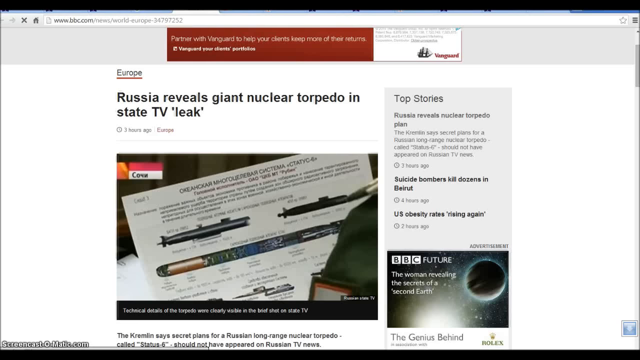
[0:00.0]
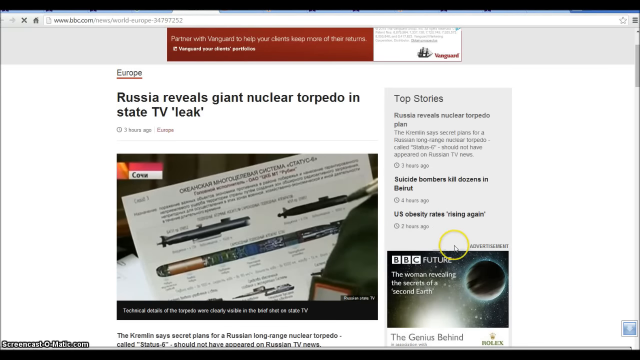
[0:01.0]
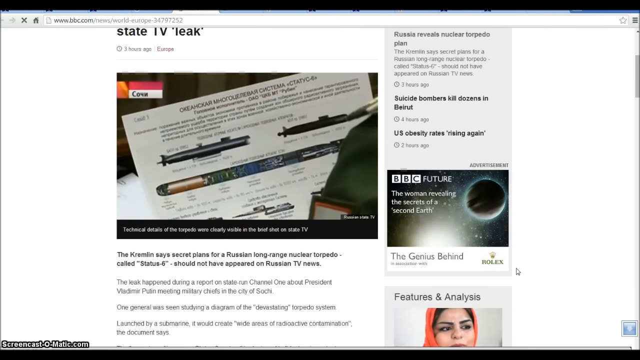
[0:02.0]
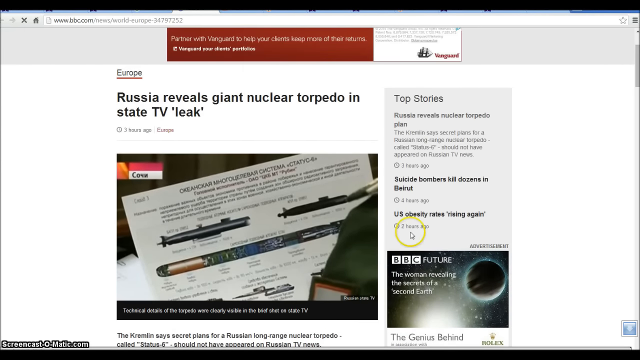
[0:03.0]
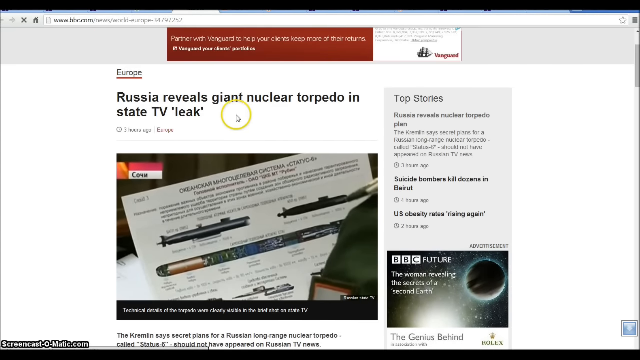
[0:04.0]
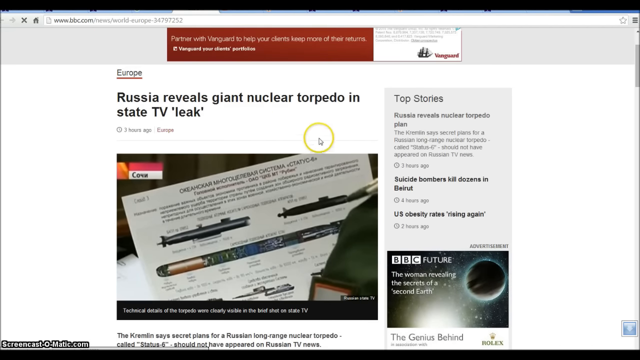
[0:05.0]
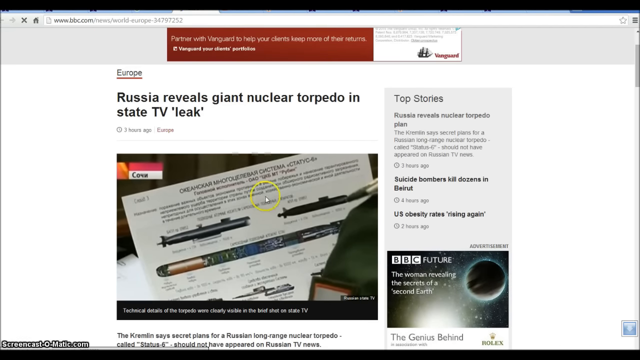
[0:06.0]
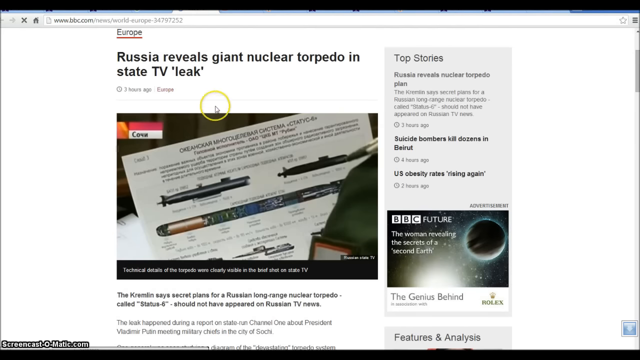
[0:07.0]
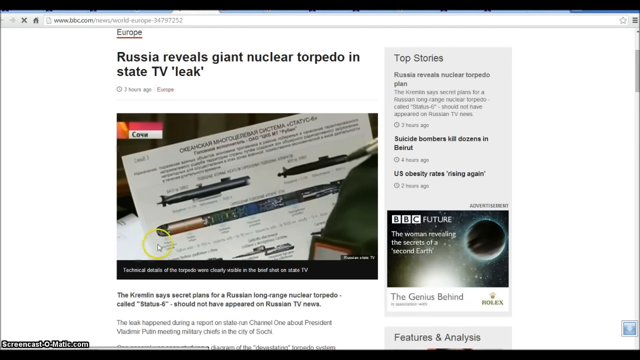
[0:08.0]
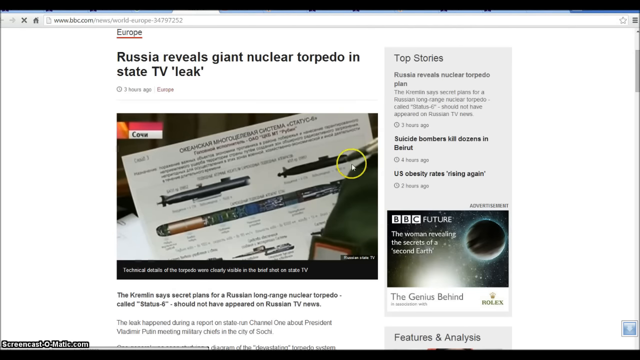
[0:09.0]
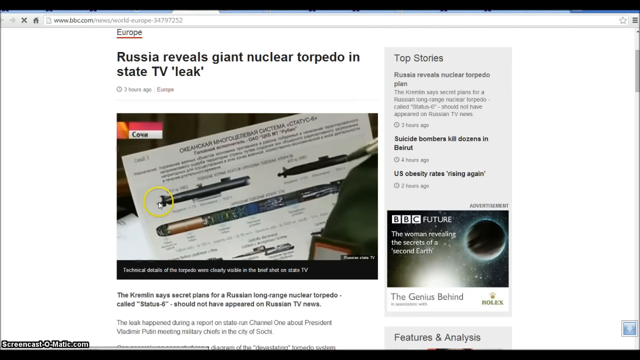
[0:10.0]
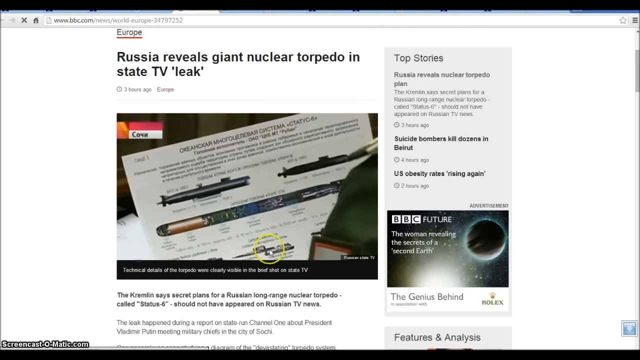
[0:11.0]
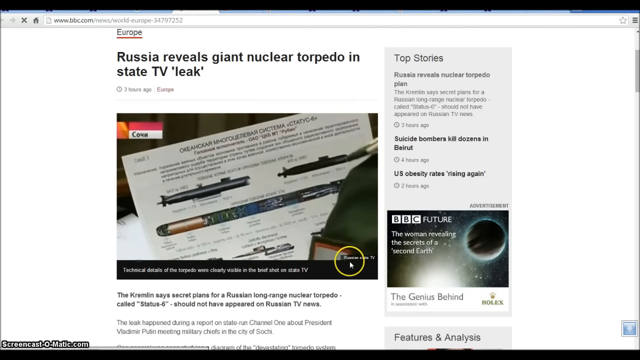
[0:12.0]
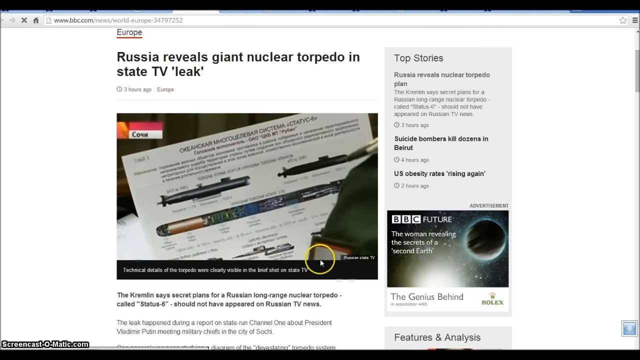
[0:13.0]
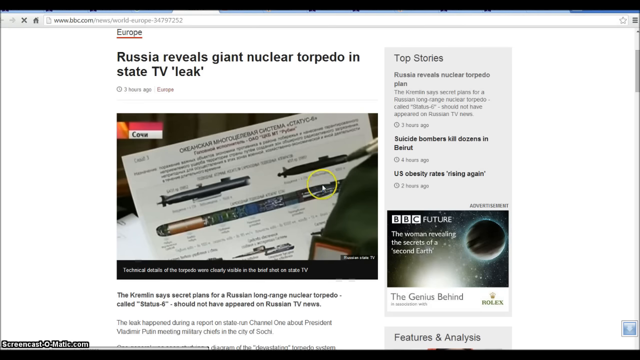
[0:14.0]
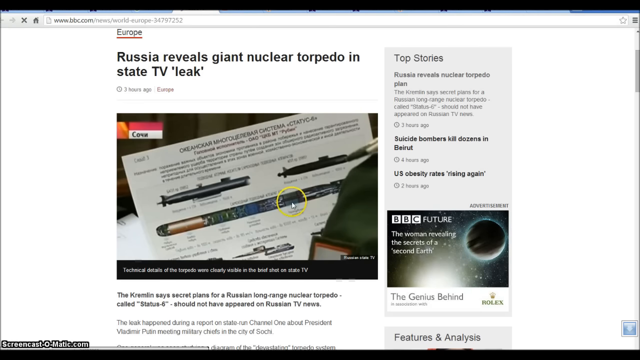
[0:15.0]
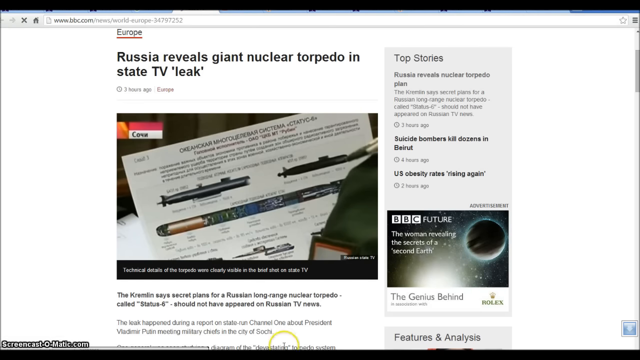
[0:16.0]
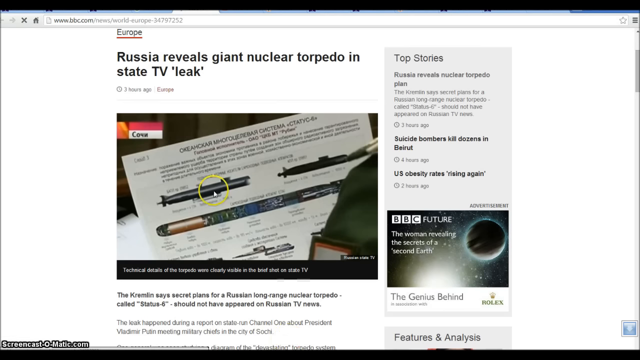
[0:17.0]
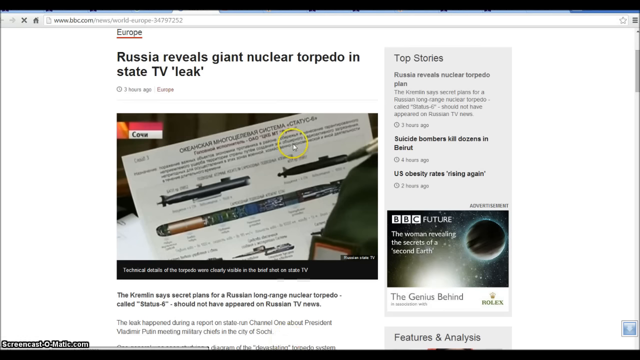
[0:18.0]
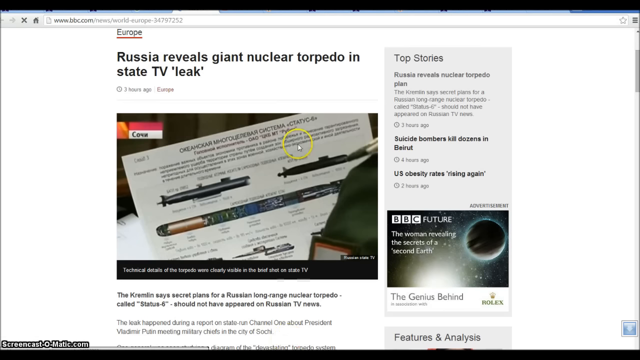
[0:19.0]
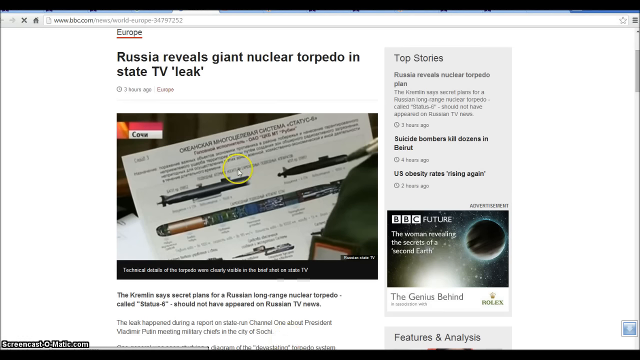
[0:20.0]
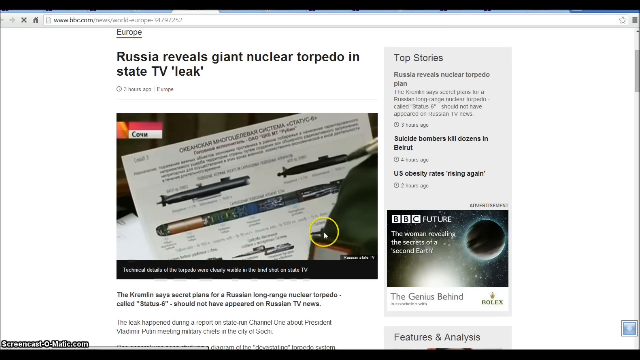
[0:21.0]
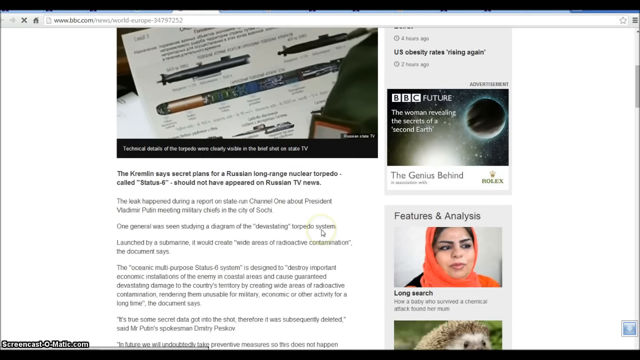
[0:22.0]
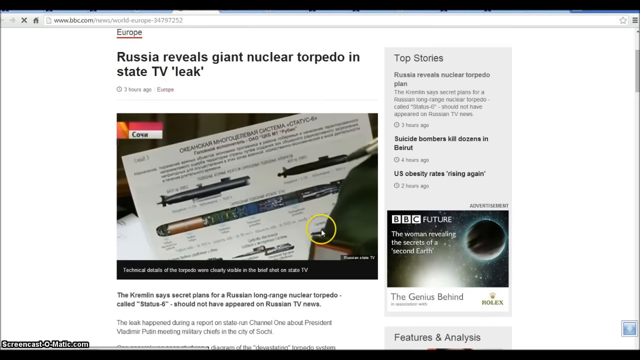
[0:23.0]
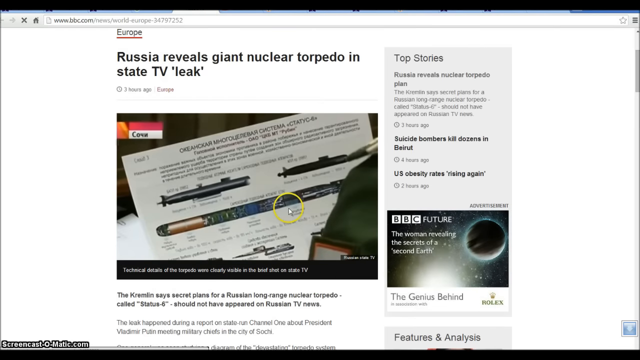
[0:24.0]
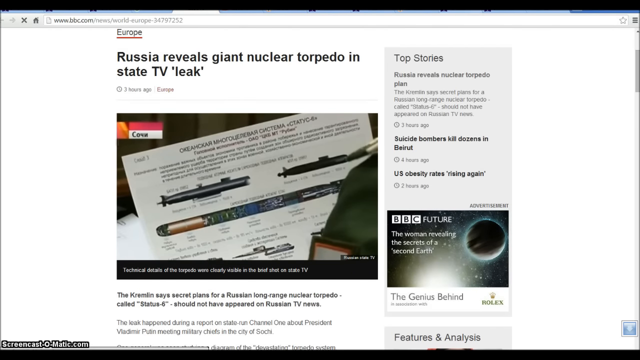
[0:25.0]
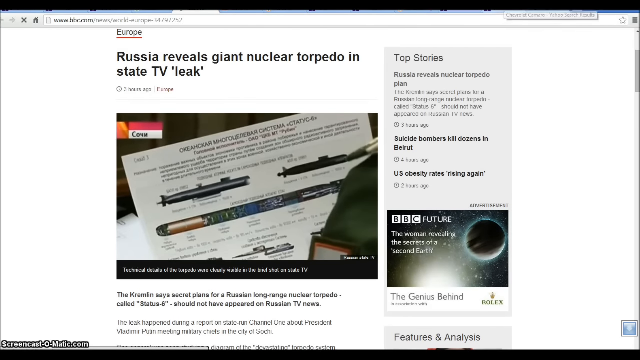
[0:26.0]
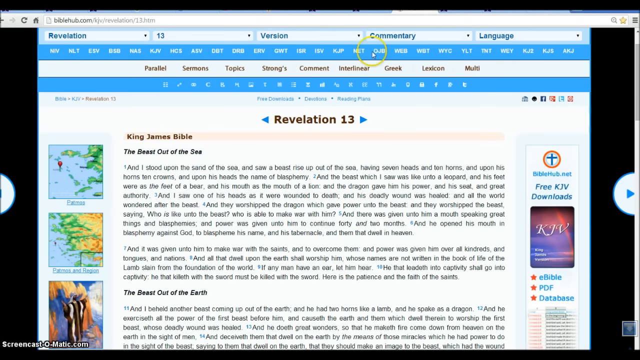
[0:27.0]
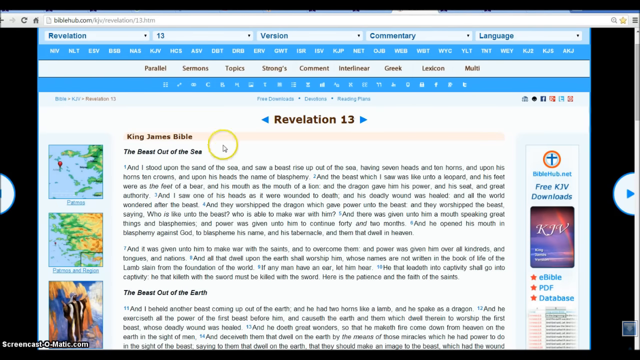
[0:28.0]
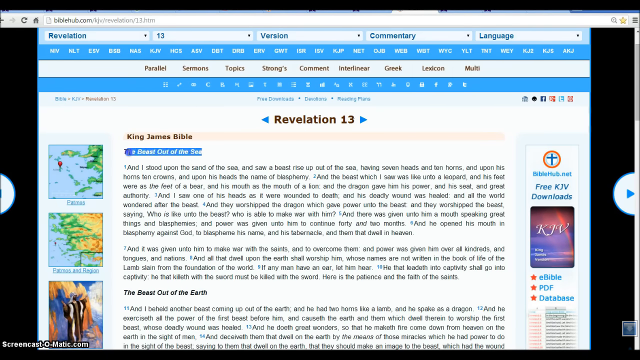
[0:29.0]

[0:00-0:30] A BBC web page is on screen, with the address www.bbc.com and "newsworldeurope-34797252". The page has a white background and shows an article whose headline reads "Russia reveals giant nuclear torpedo in state TV leak". Below it is a picture showing technical details of the torpedo, and a cursor with a yellow highlight moves around the picture. The page scrolls down, then scrolls back up. In the top stories section are the items "Russia's revealed nuclear torpedo plan" and "suicide bombers killed dozen in". No hand or person appears; there is only the screen with the bbc.com website.